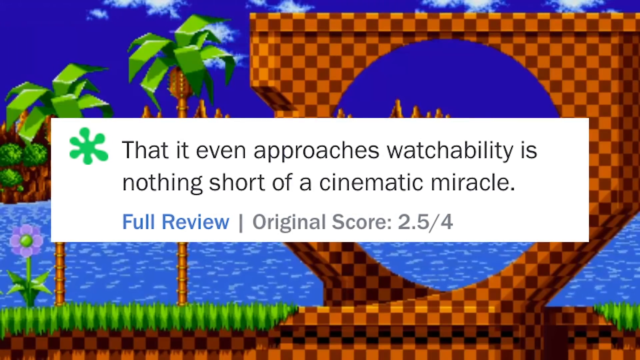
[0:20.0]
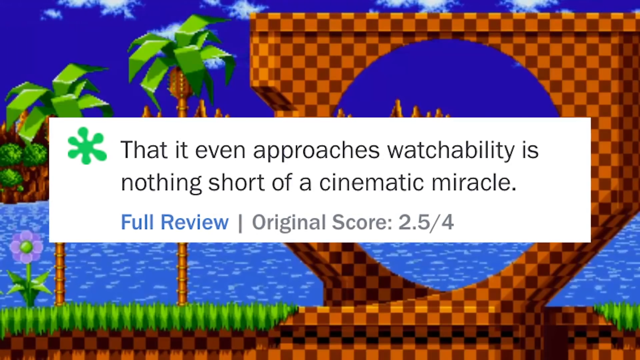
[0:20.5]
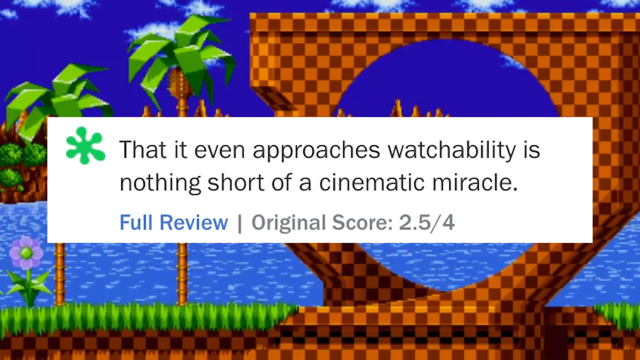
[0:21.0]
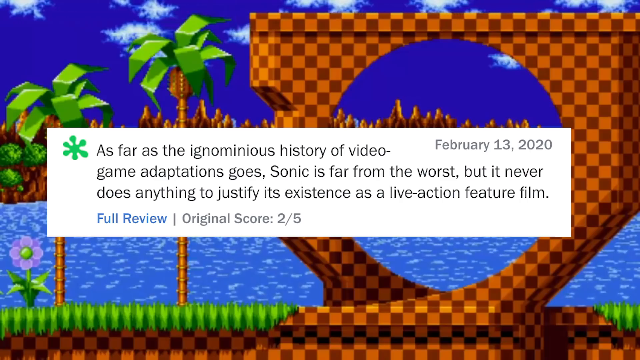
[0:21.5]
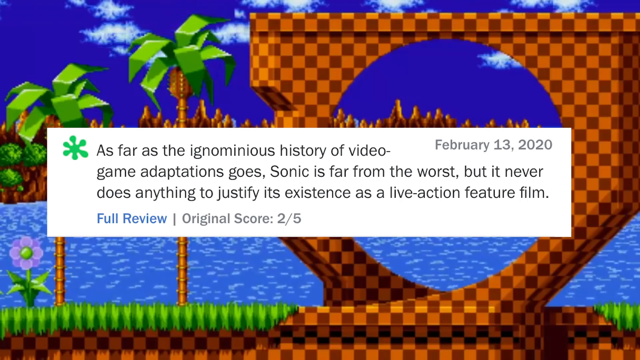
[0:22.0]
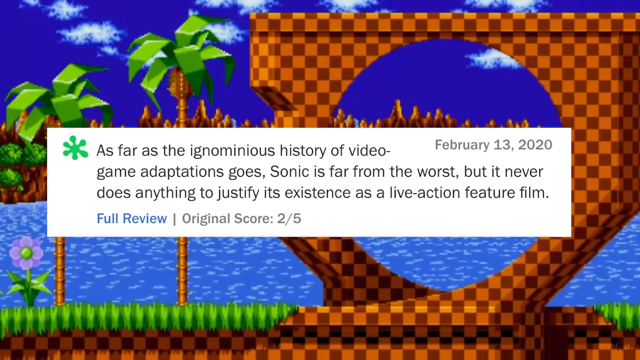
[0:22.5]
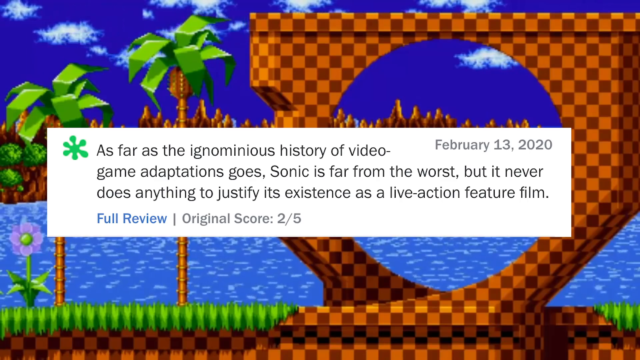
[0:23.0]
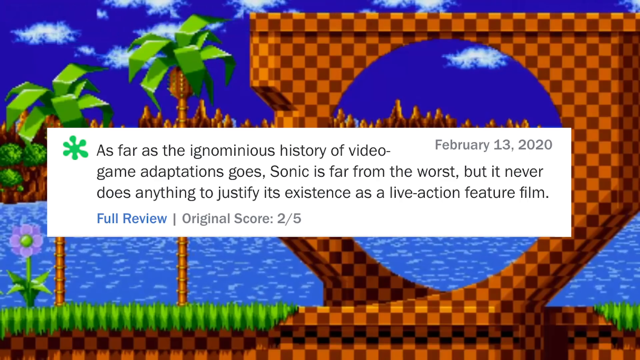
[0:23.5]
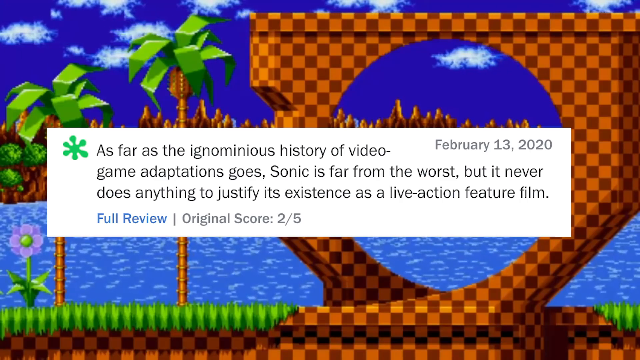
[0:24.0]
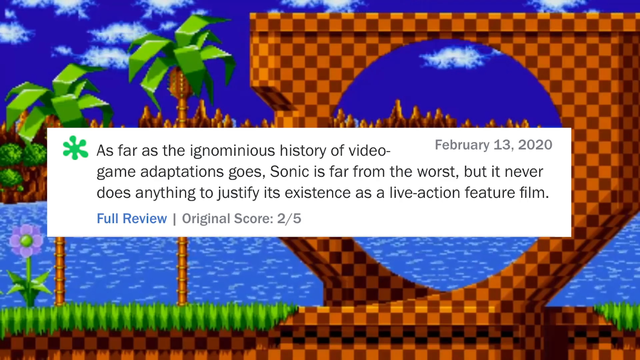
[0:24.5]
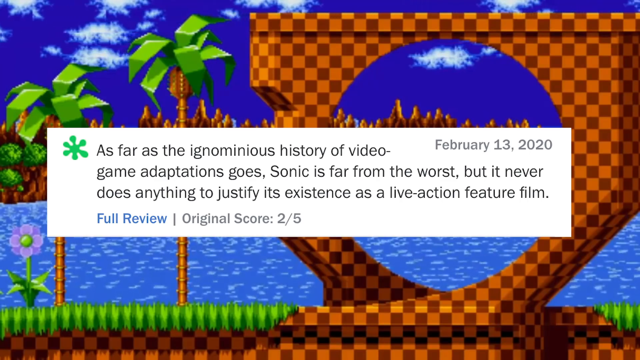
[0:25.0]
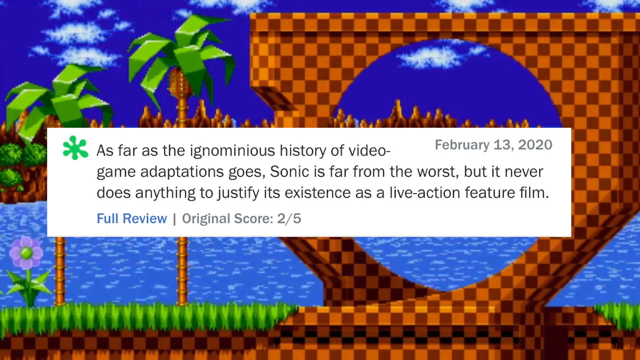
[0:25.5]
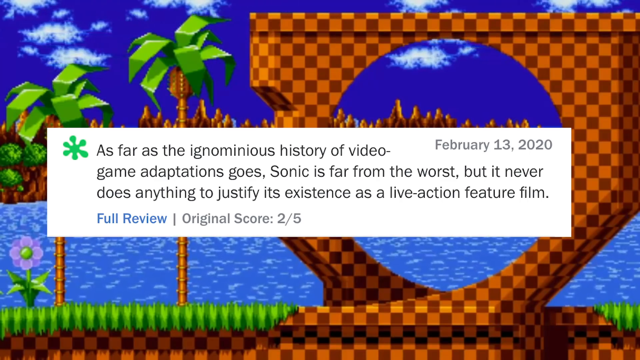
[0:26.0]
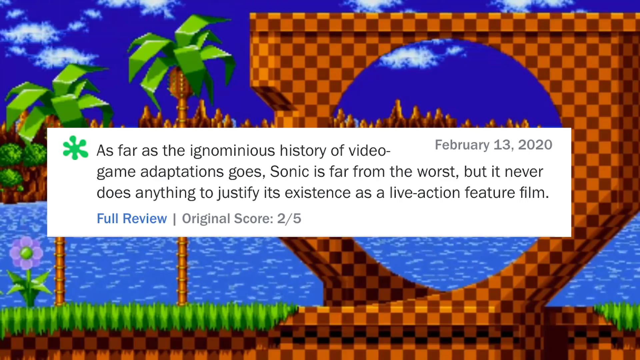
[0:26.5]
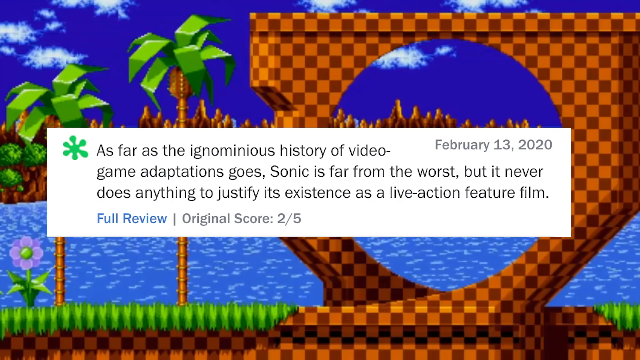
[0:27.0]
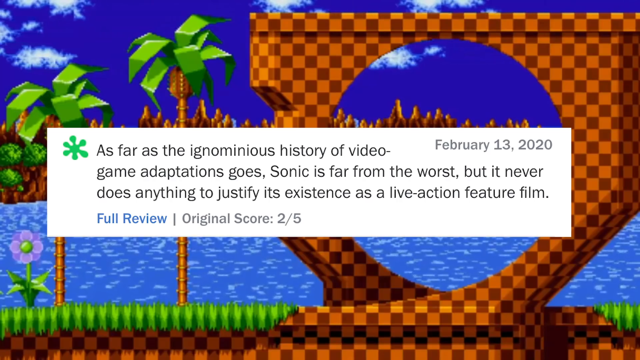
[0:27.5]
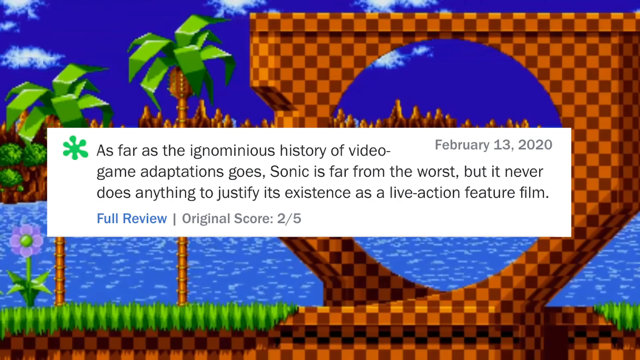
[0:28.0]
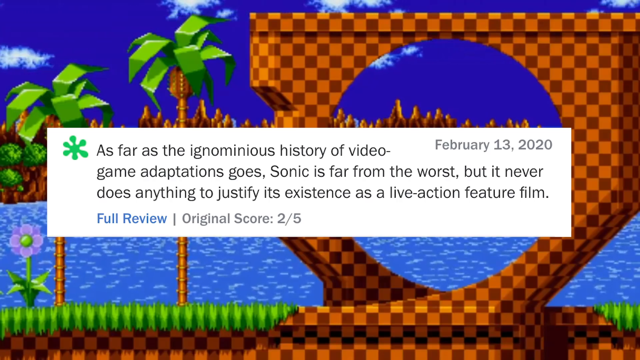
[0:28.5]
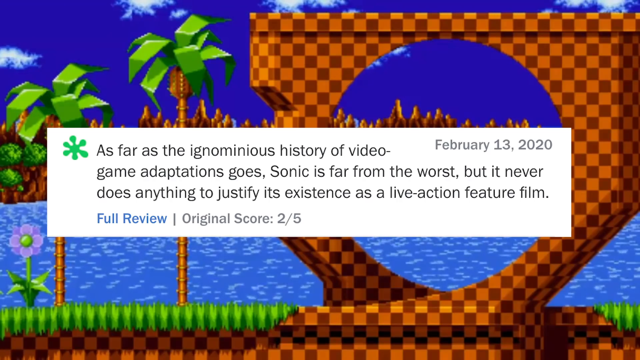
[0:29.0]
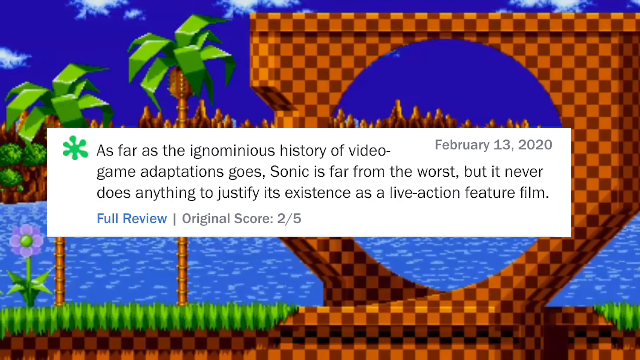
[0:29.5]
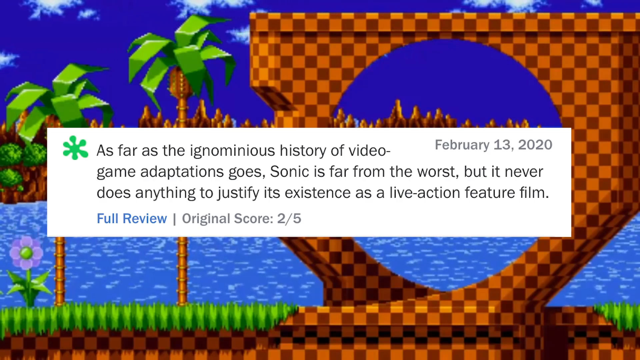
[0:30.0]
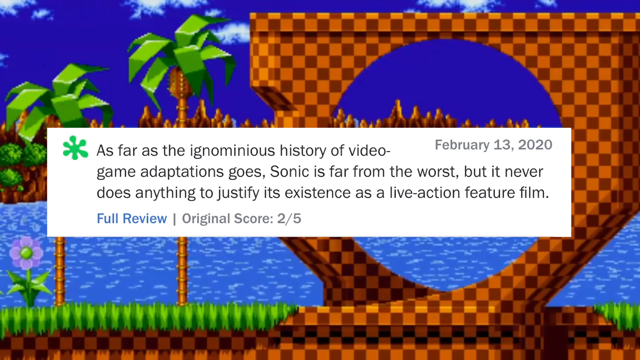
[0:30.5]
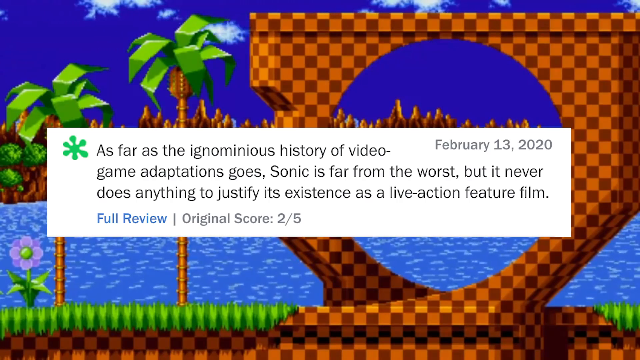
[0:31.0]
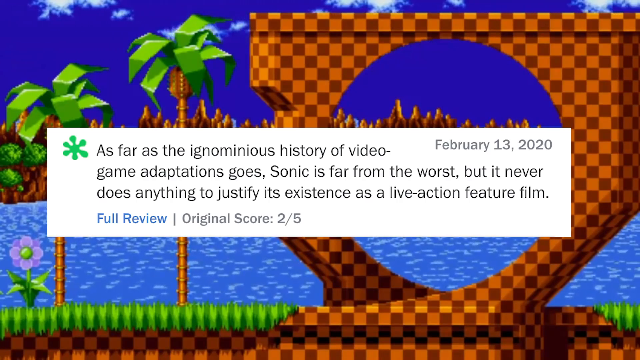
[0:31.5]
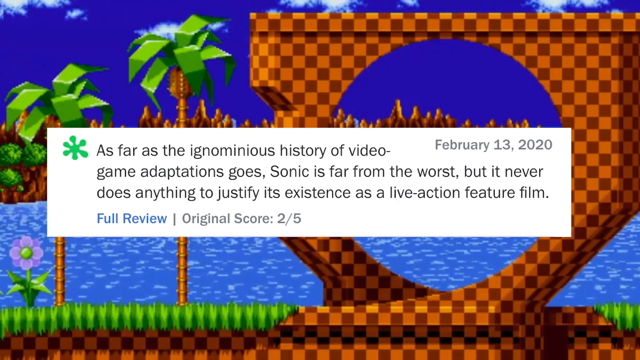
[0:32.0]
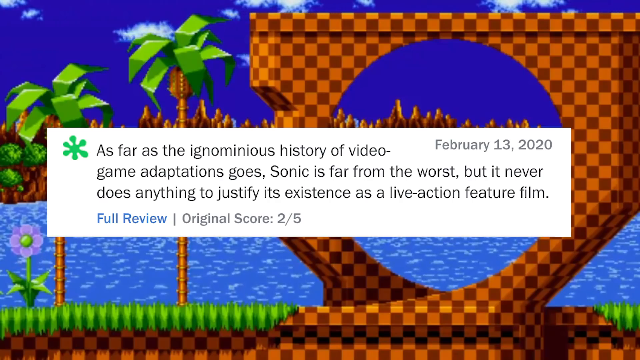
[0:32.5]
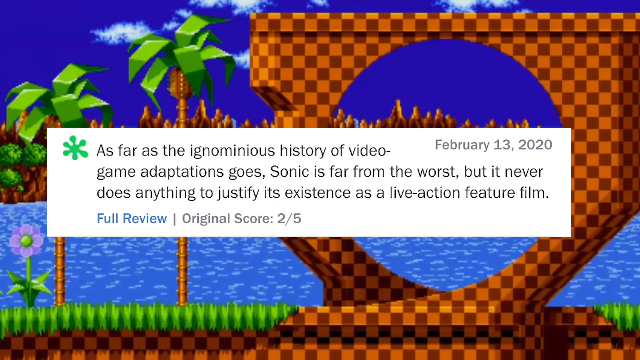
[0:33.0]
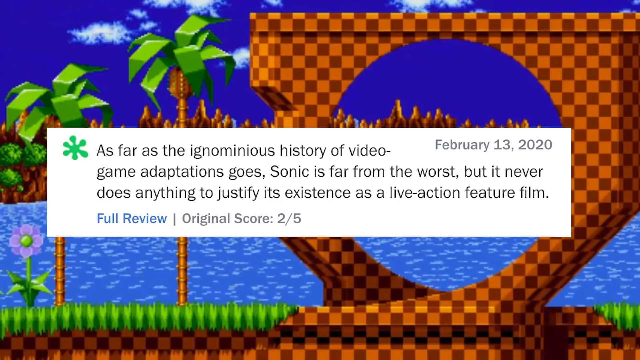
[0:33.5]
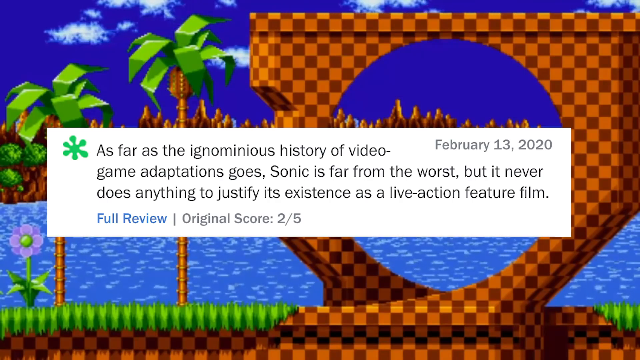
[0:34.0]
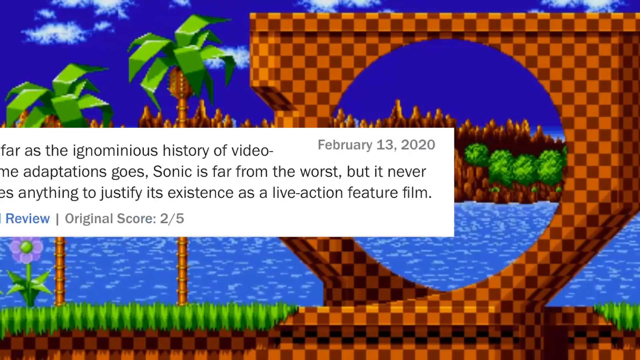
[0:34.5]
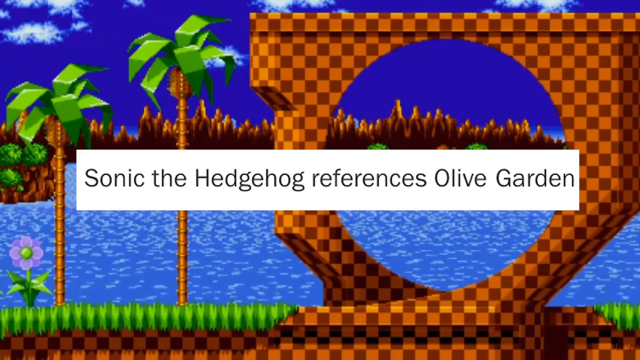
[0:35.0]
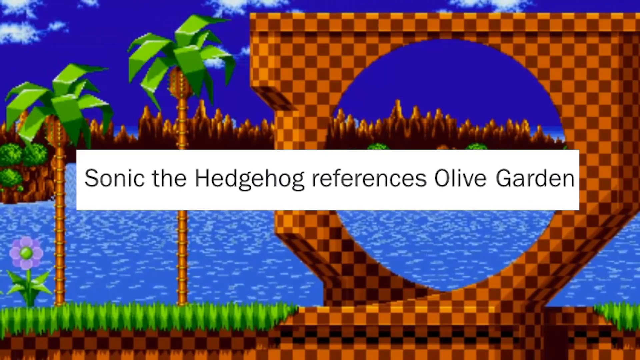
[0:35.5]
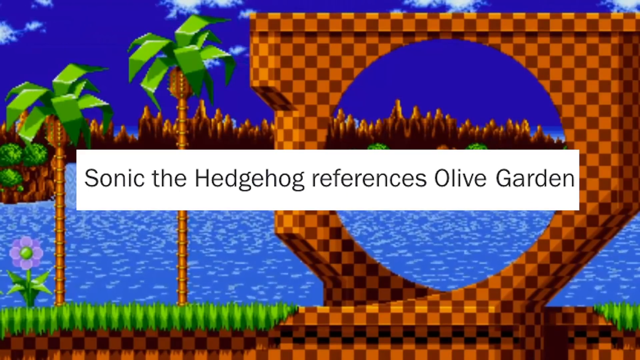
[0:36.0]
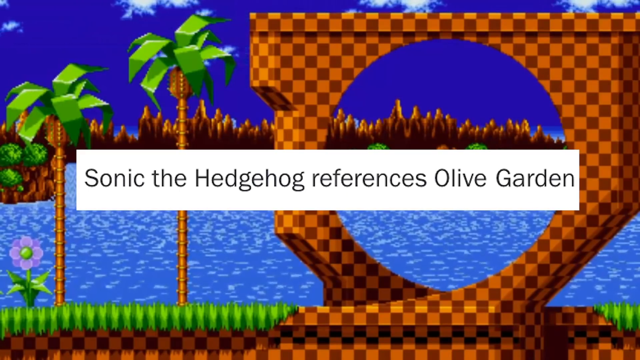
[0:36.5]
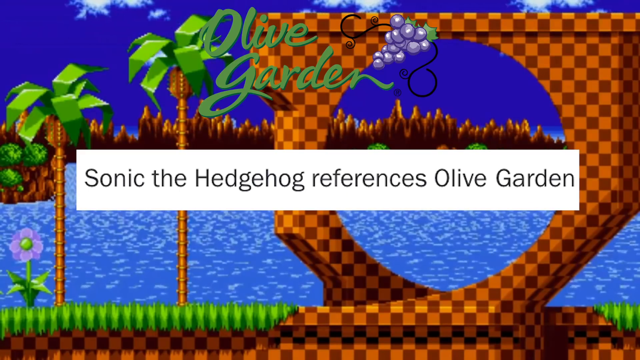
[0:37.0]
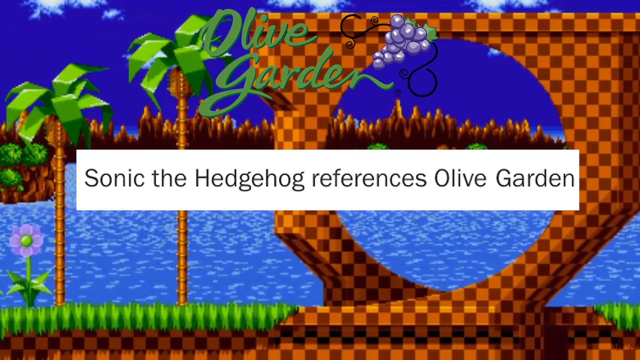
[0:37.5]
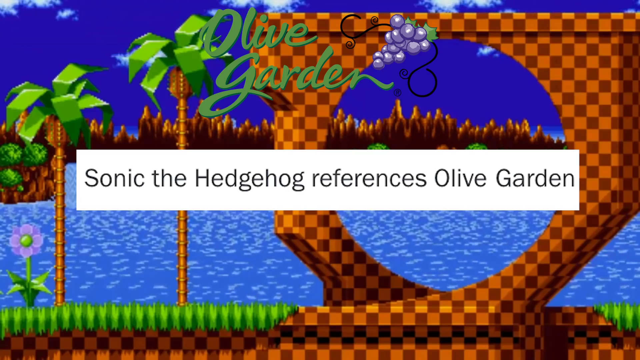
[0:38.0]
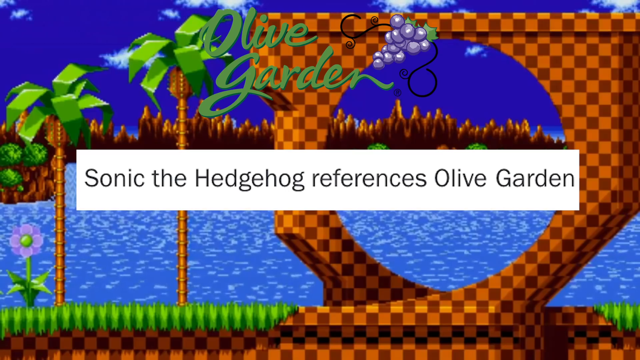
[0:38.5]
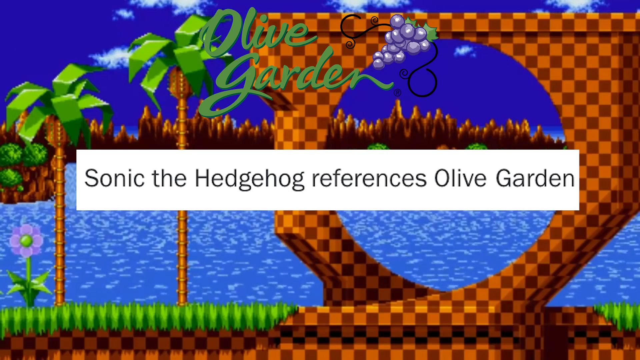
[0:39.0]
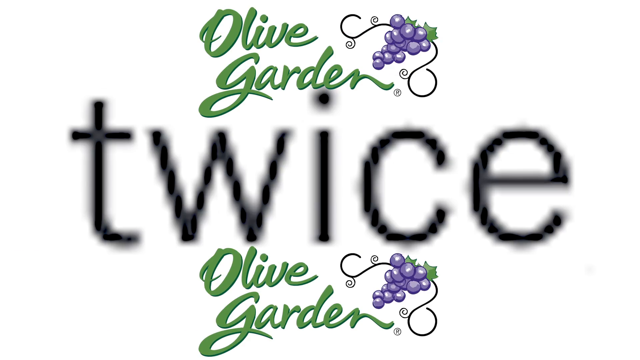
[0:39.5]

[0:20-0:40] The reviews of Sonic the Hedgehog continue. The next one, from February 13th, 2020, states: "As far as the ignominious history of video game adaptions goes, Sonic is far from the worst, but it never does anything to justify its existence as a live-action feature film," with a score of two out of five. The backdrop is still the same pixel, low-tech computer game scene; the clouds are moving and nothing else is. A review then states "Sonic the Hedgehog references Olive Garden," and the Olive Garden logo appears.